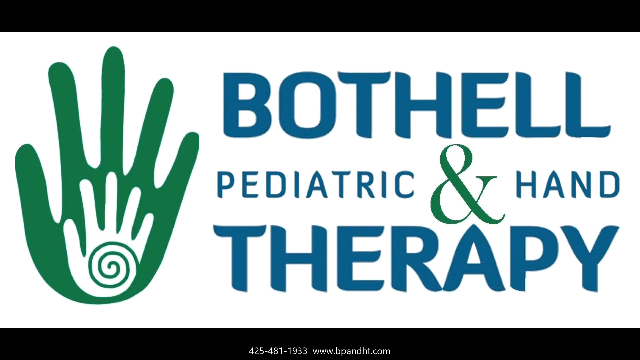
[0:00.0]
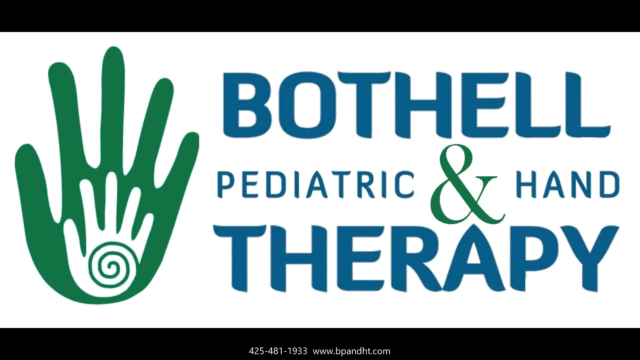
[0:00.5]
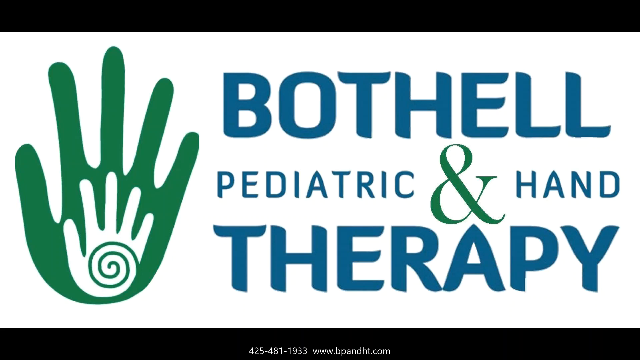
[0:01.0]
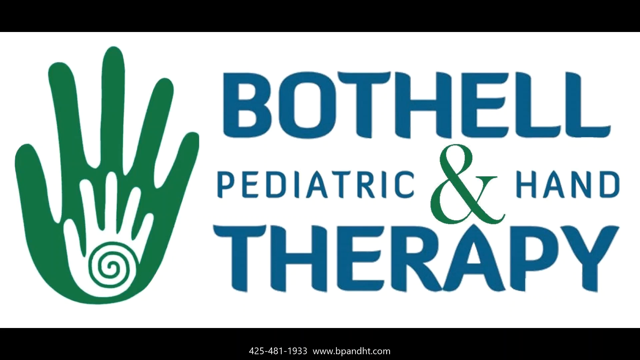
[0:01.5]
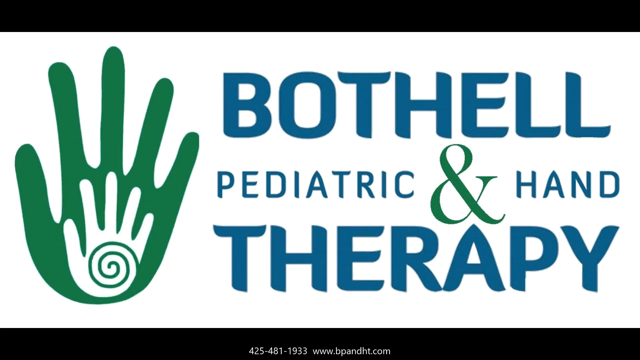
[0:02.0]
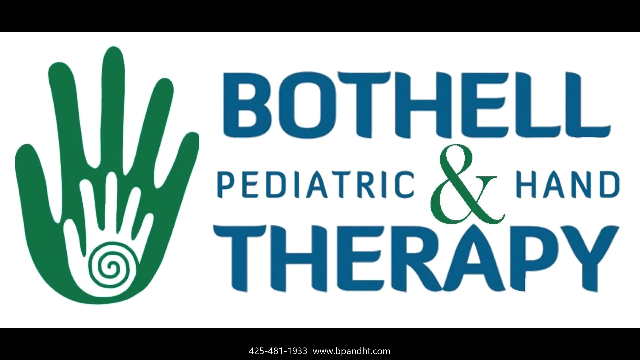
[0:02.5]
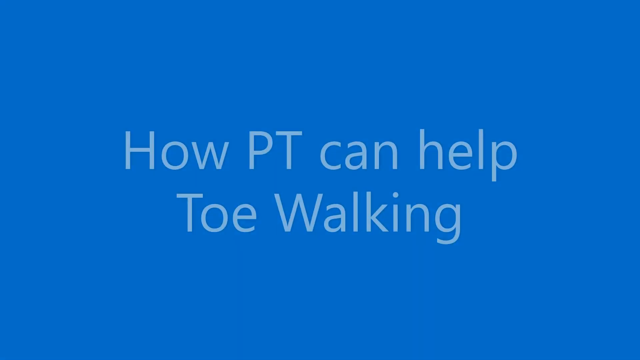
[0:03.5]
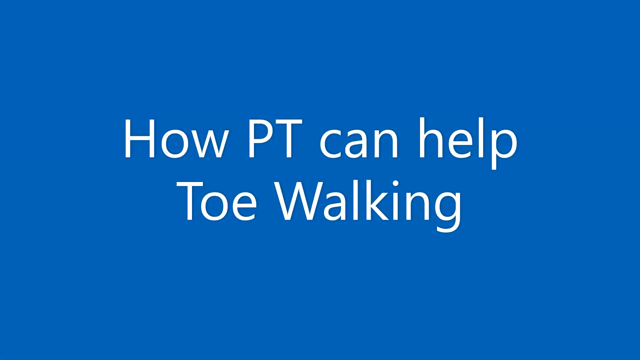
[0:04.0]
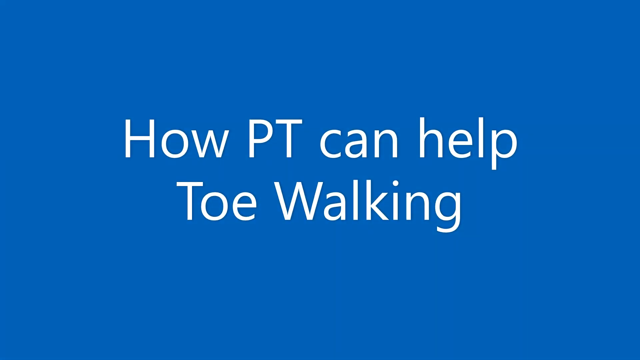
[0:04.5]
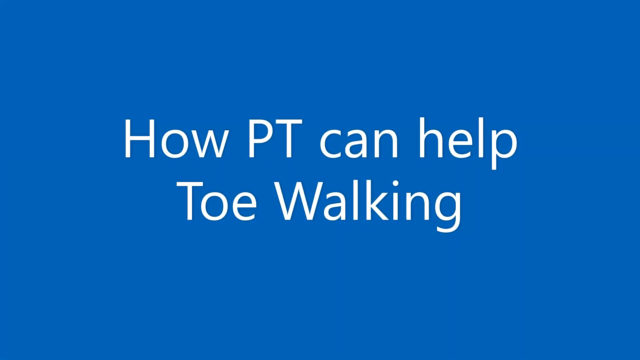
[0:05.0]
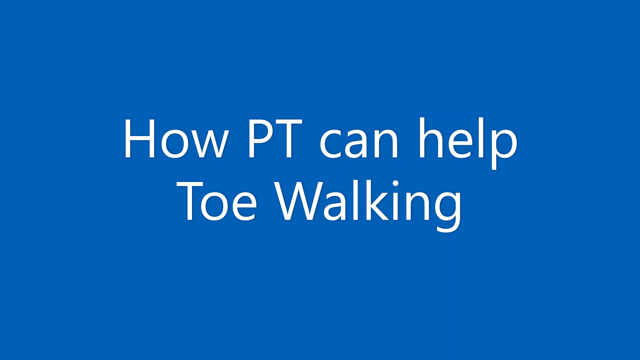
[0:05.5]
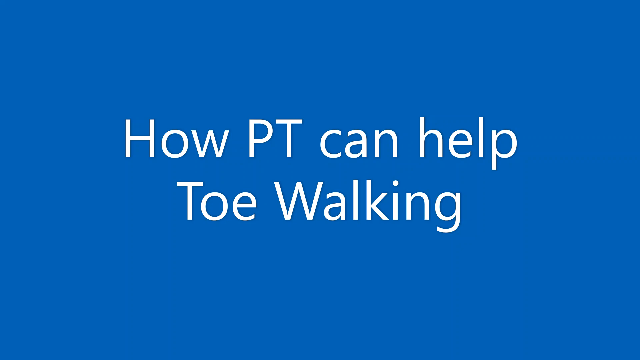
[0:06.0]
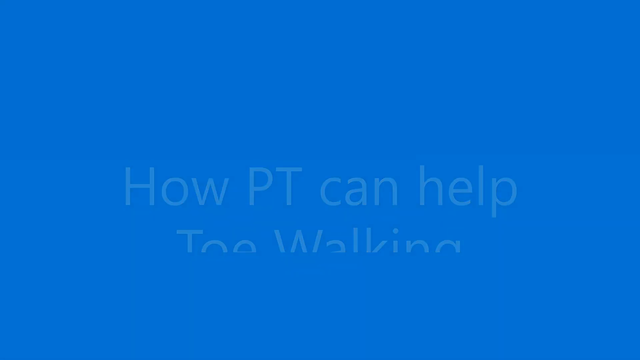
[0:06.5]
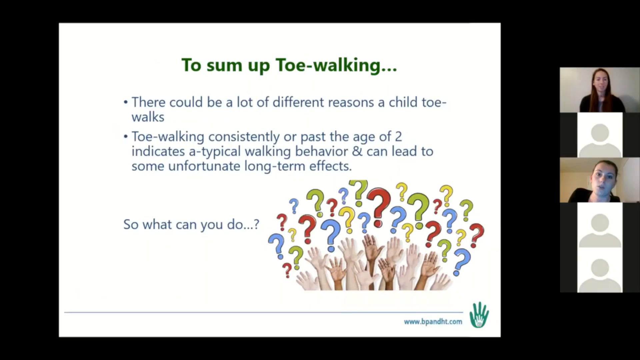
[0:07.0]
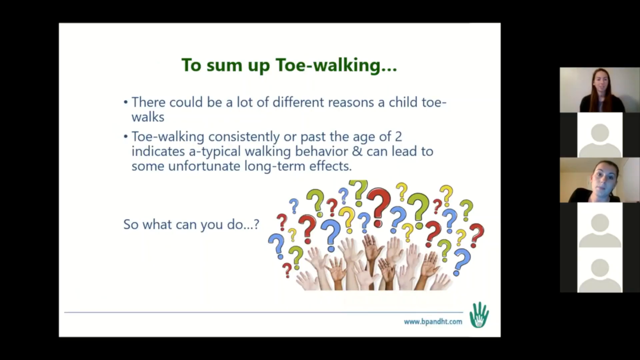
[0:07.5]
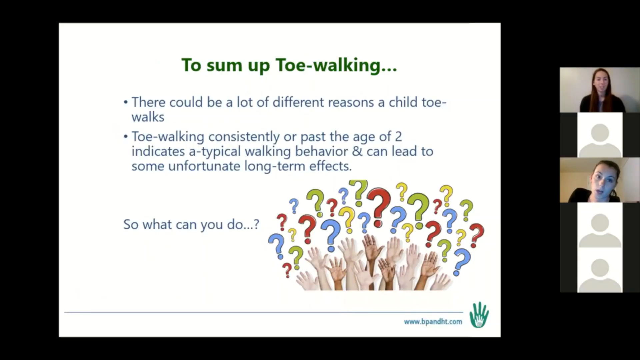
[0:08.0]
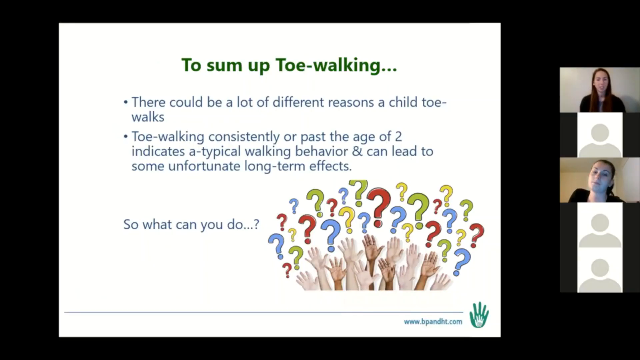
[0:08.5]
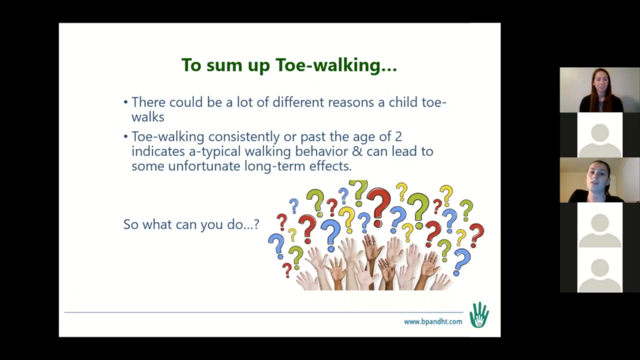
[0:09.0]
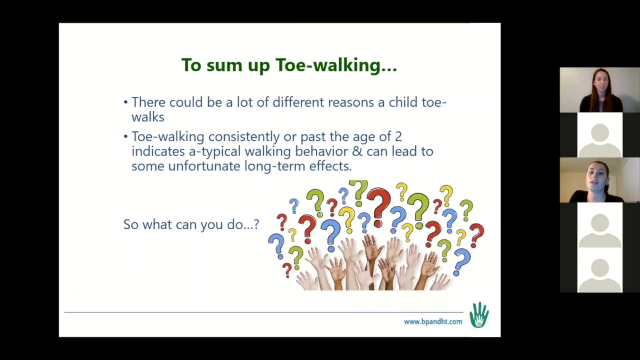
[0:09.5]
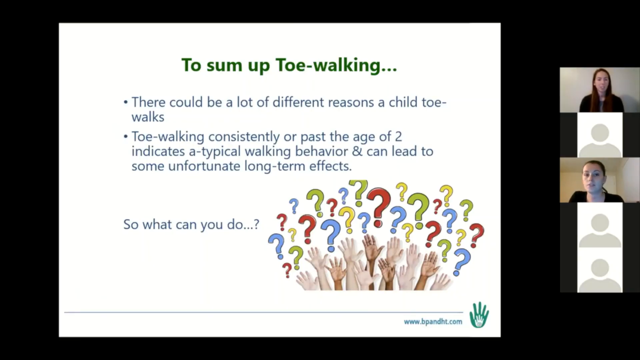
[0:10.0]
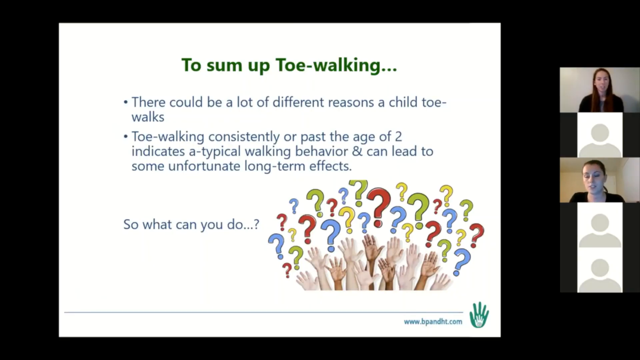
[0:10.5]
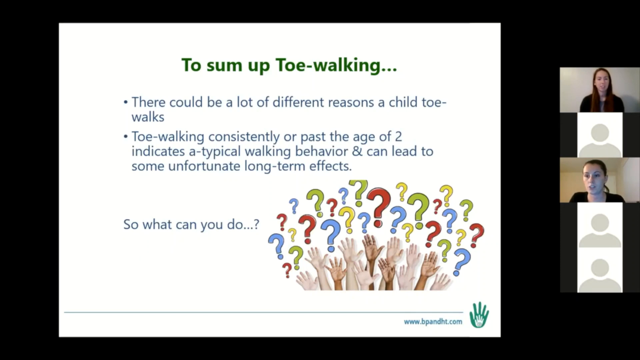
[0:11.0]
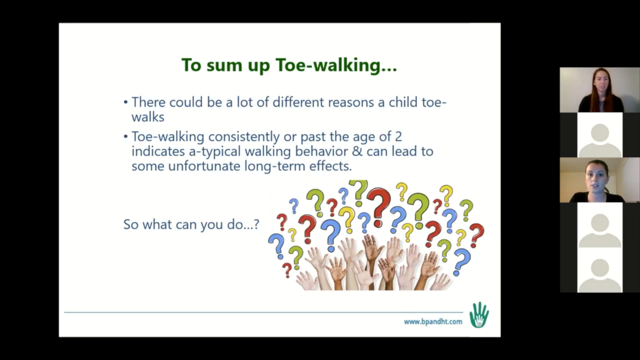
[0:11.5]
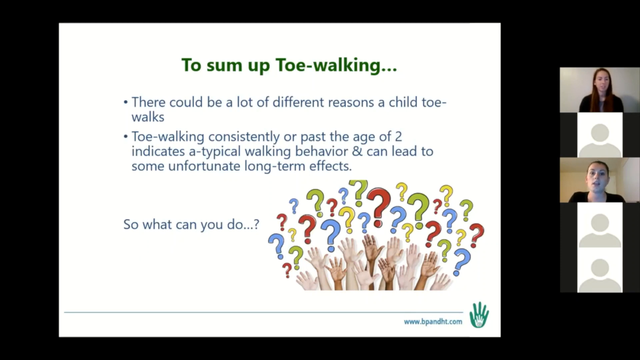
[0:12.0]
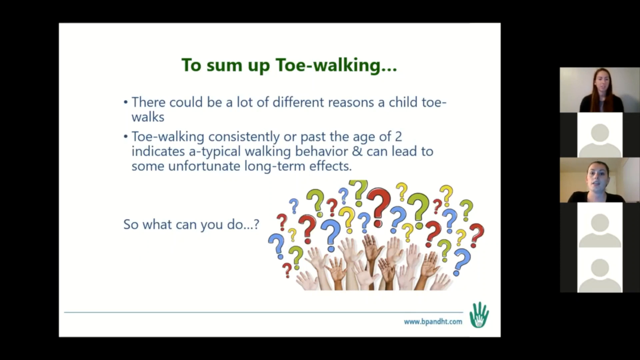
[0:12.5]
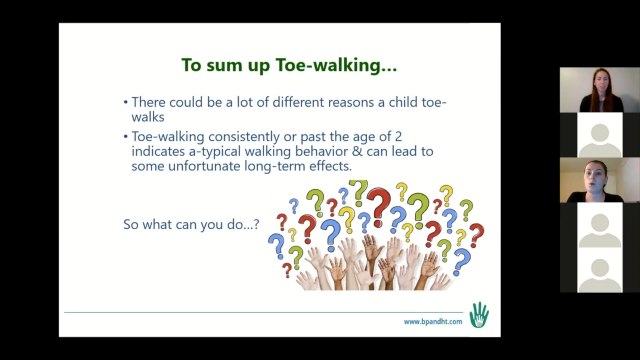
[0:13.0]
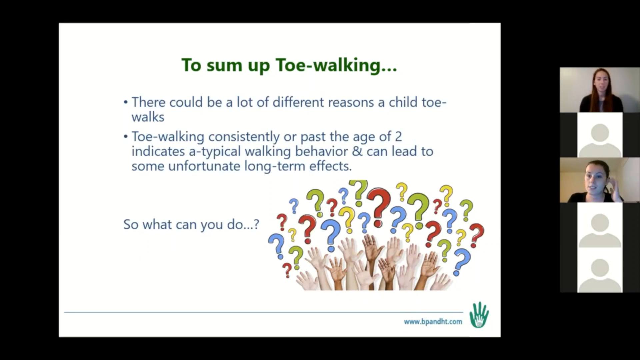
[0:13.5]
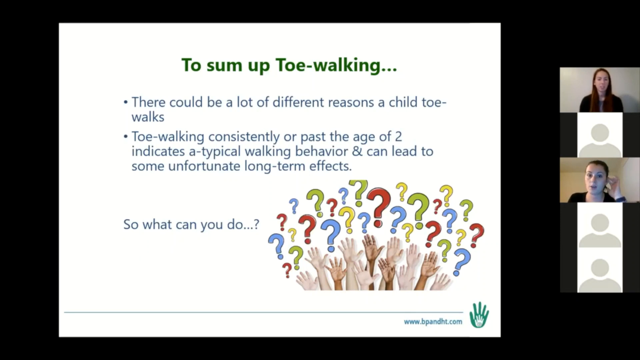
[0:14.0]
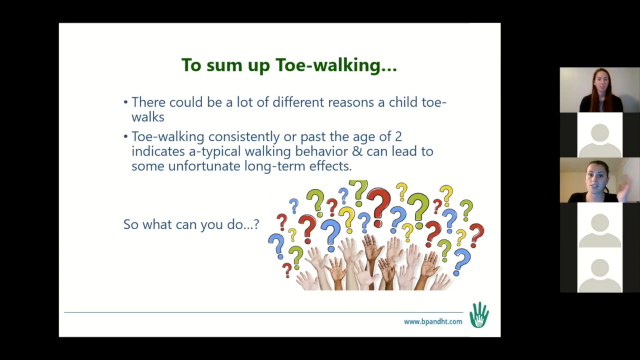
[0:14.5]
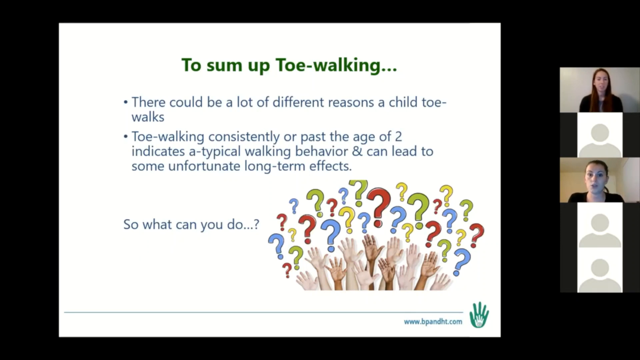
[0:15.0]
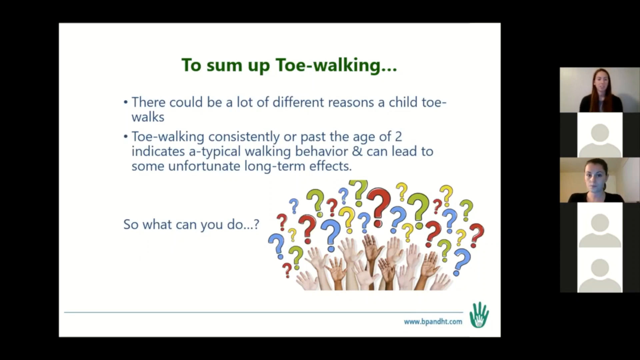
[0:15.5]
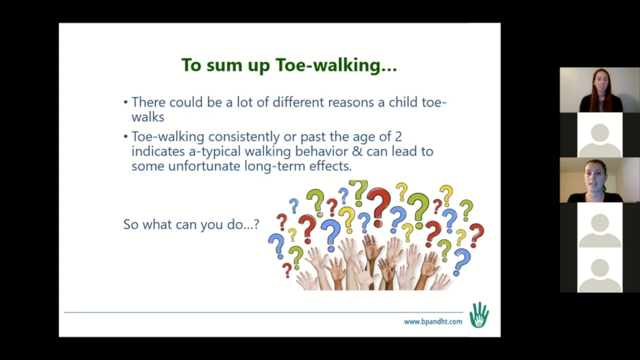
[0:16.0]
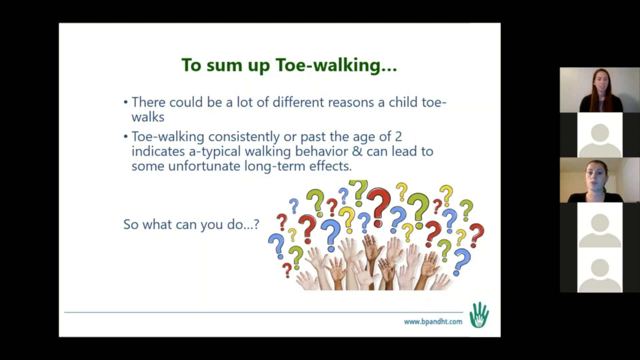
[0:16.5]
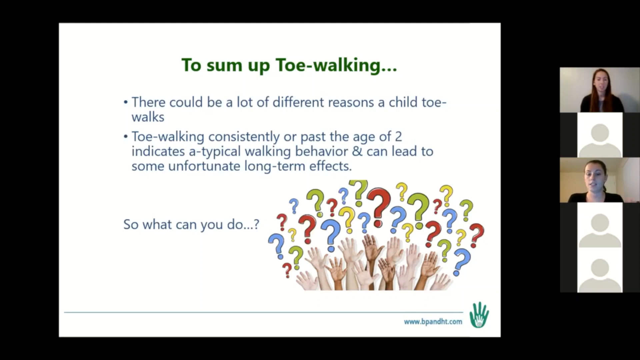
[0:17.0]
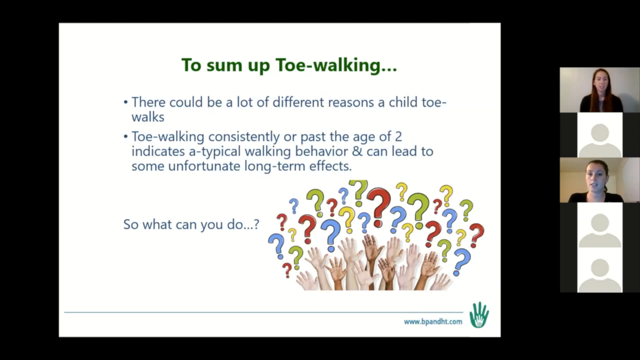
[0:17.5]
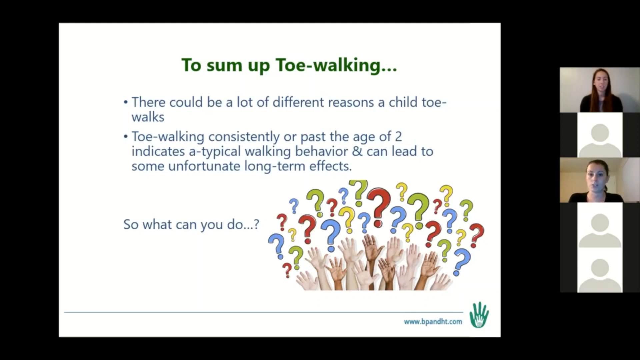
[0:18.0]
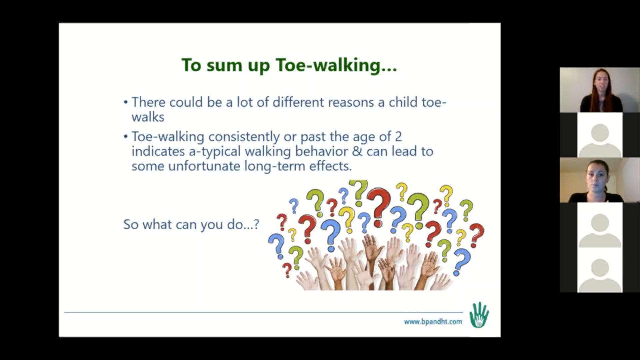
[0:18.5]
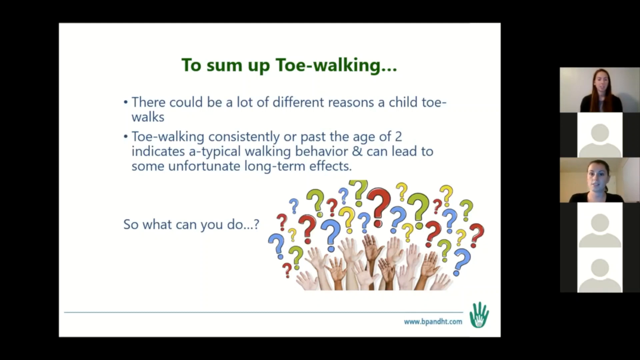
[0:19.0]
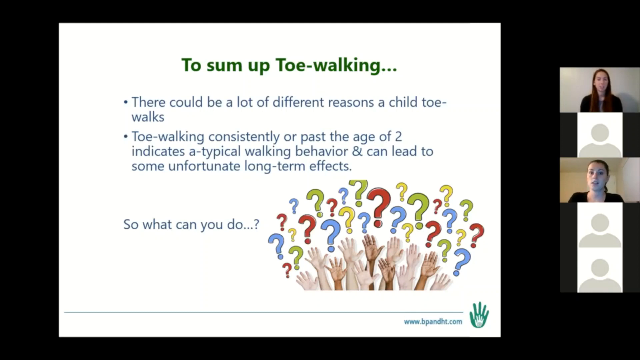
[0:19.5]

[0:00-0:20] The opening screen shows a graphic illustration of what looks like two palms: a small white palm with a green swirl circle on it, nested inside a larger green palm, on the left side of the screen. Beside it are the words "Bothel Pediatric & Hand Therapy" in blue text, with all the illustrations on a white background. This stays on screen for about two seconds. Next comes a blue screen, and a text effect pops up in white reading "how PT can help toe walking"; the text slides downward and disappears. What looks like a computer screen with a video conferencing call appears next. Five participants are shown along the right side: a live video of a person's face, below it an icon of a human, then another person who is a lady, and two more participant icons that look like blank human icons. What looks like a slide is on the screen, with the words "to sum up toe walking" followed by two smaller bullet points reading "there could be a lot of different reasons a child's toe walks" and "toe walking consistently or past the age of two indicates a typical walking behavior and can lead to some unfortunate long-term effects. So what can you do?" On the lower right of the presentation is an illustration of lots of raised hands and question marks in various colors.